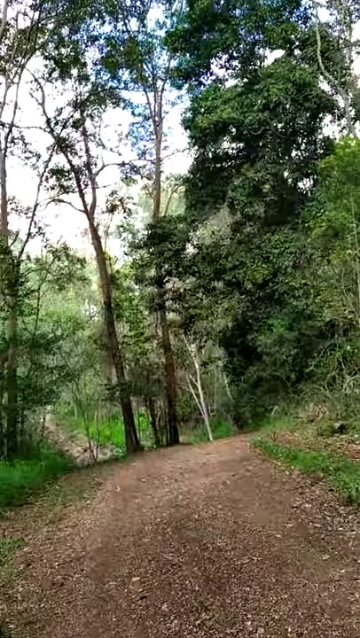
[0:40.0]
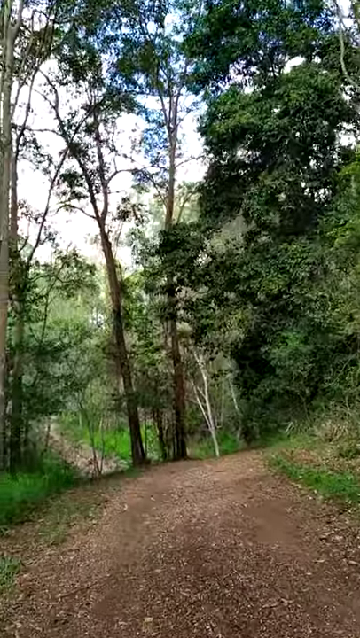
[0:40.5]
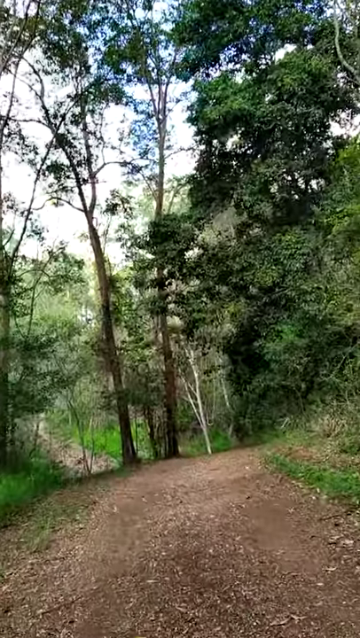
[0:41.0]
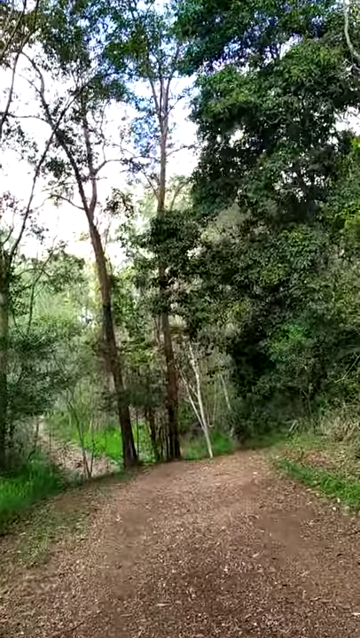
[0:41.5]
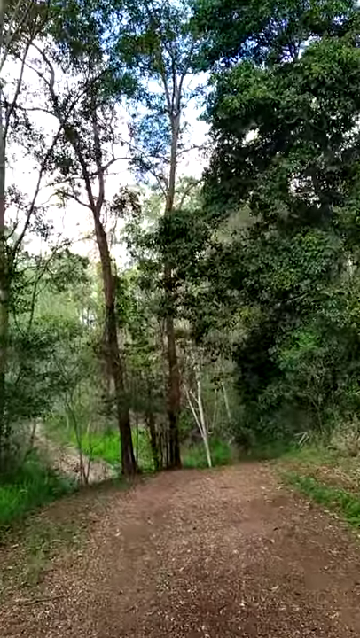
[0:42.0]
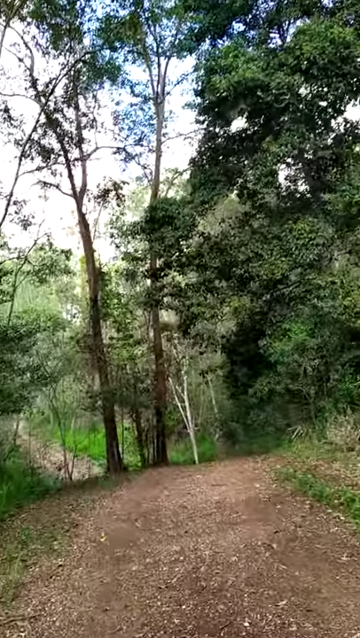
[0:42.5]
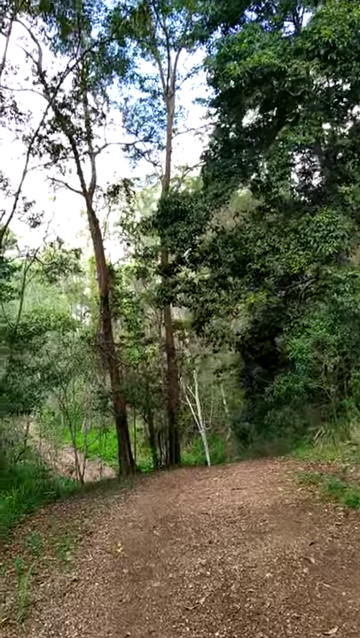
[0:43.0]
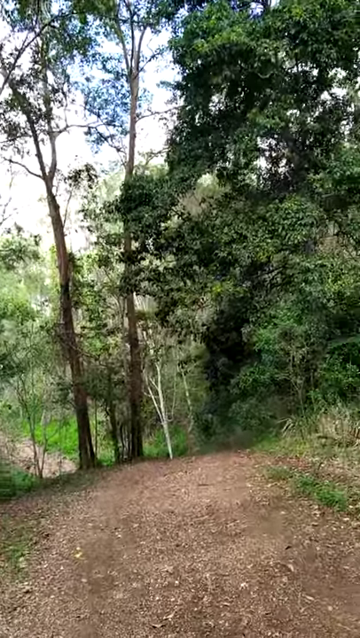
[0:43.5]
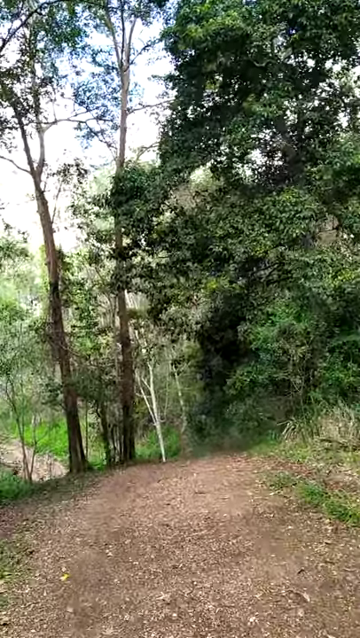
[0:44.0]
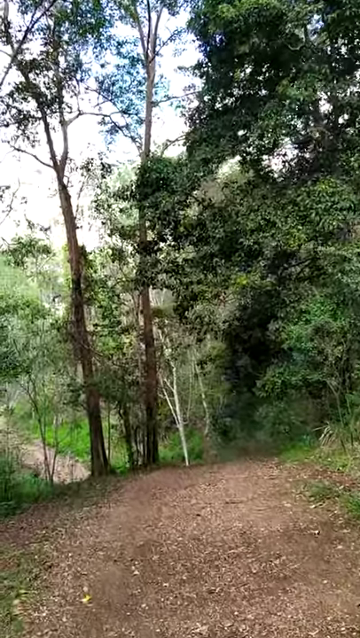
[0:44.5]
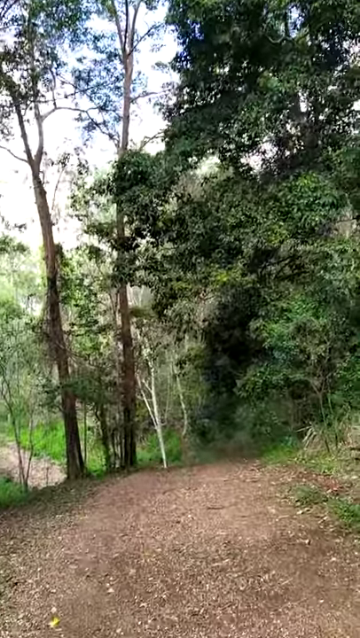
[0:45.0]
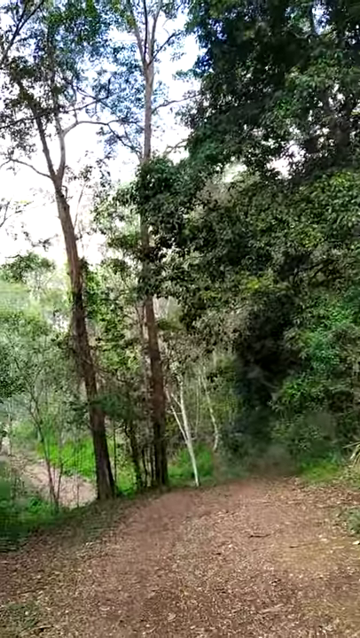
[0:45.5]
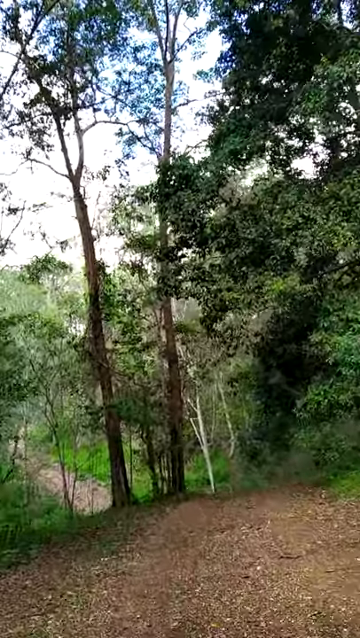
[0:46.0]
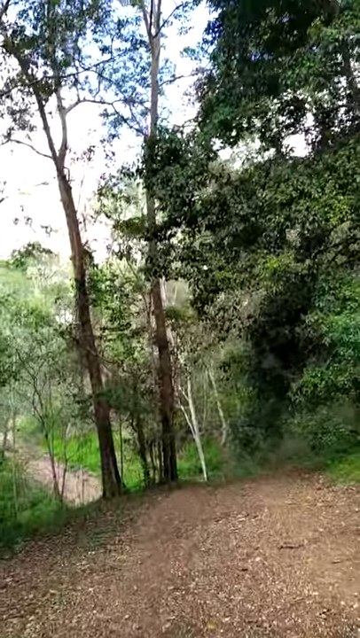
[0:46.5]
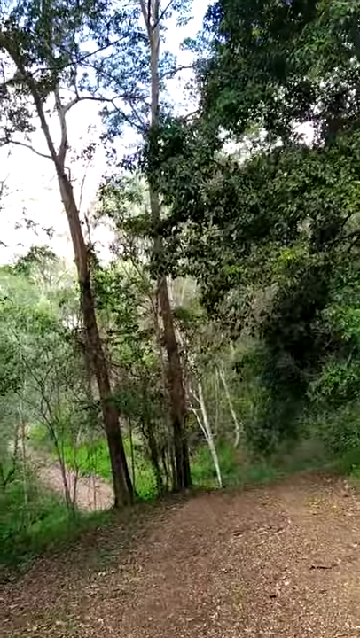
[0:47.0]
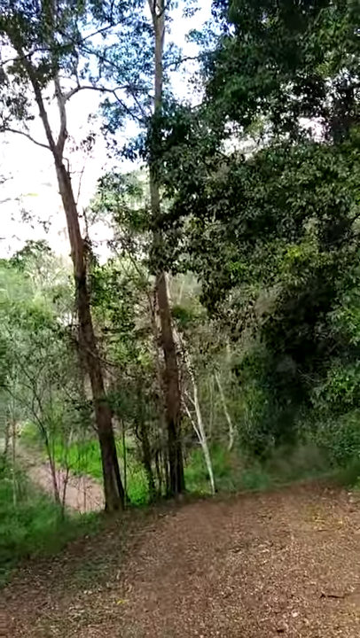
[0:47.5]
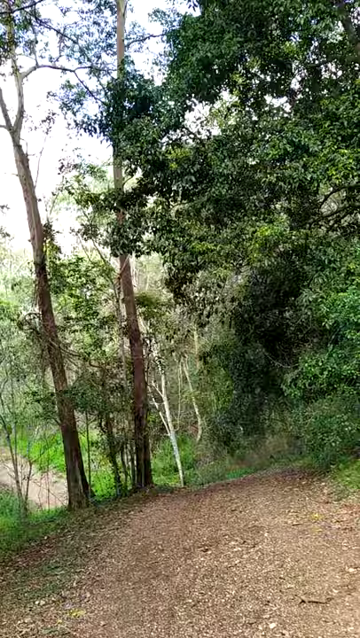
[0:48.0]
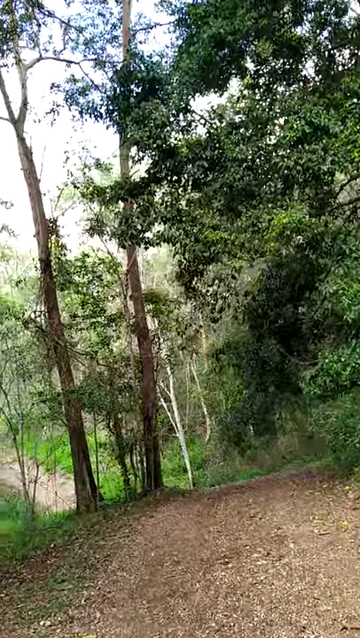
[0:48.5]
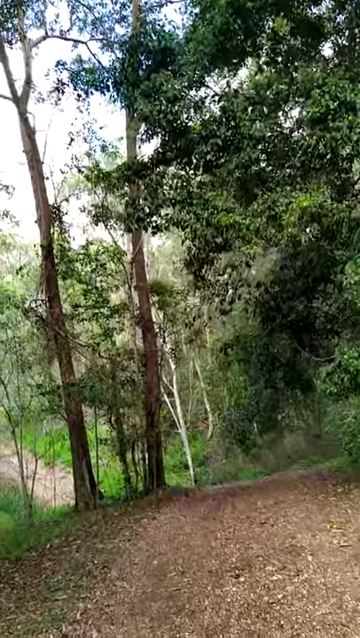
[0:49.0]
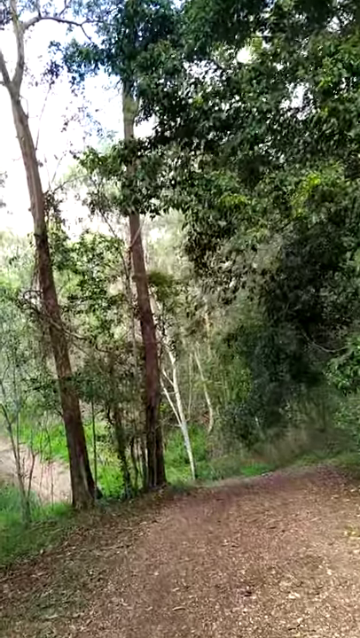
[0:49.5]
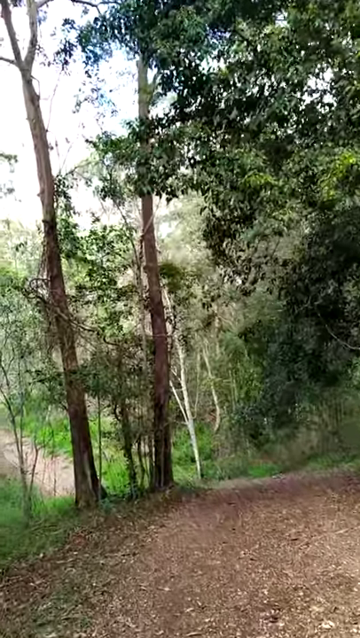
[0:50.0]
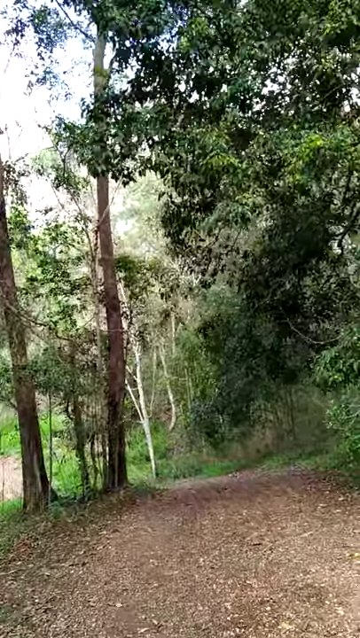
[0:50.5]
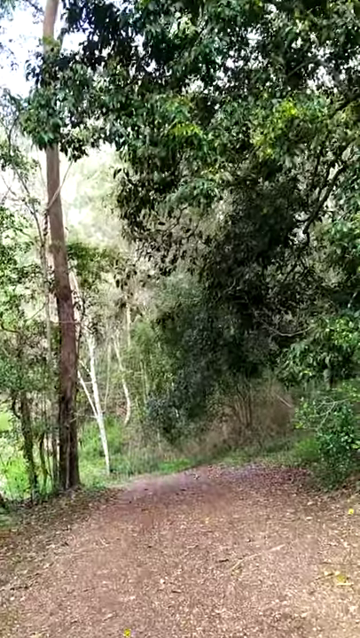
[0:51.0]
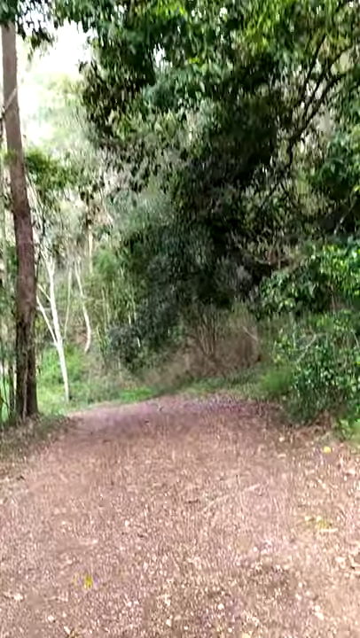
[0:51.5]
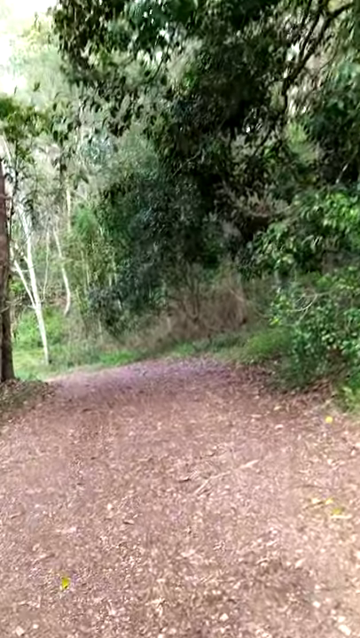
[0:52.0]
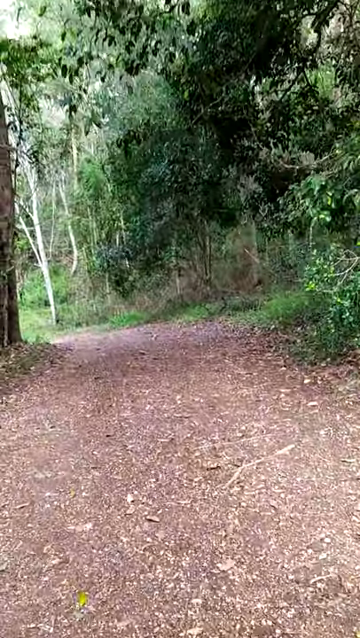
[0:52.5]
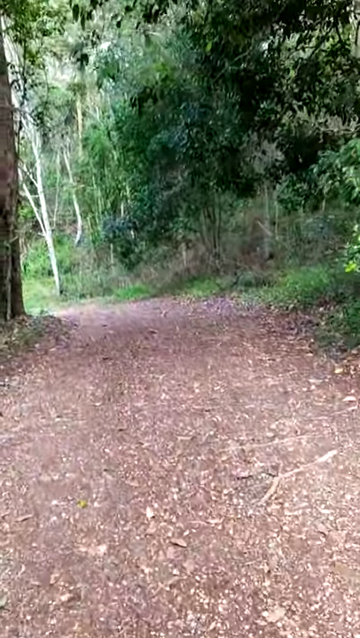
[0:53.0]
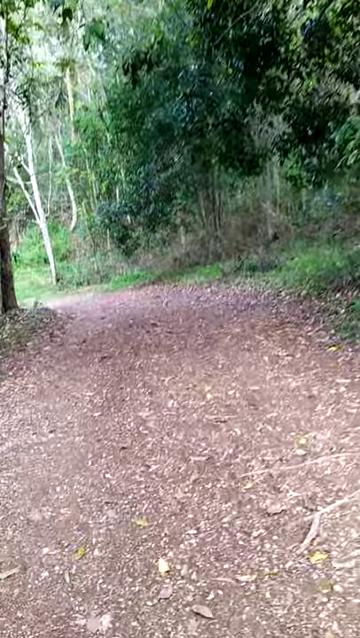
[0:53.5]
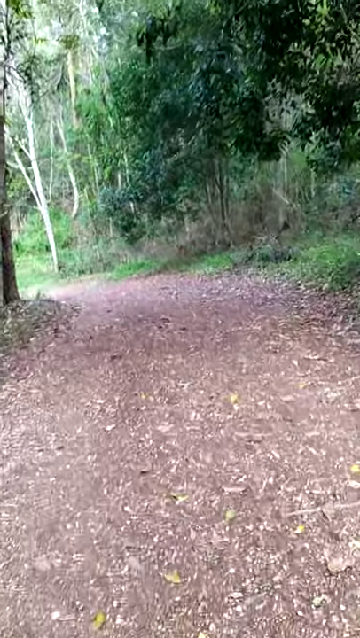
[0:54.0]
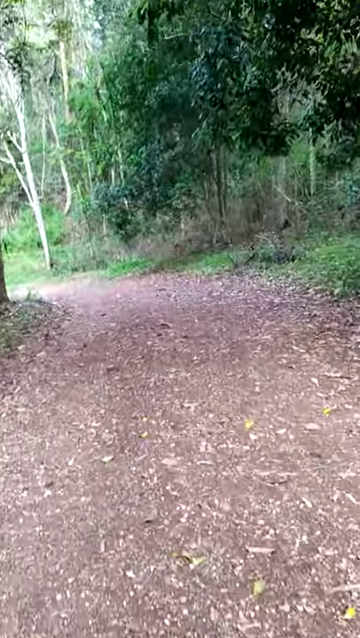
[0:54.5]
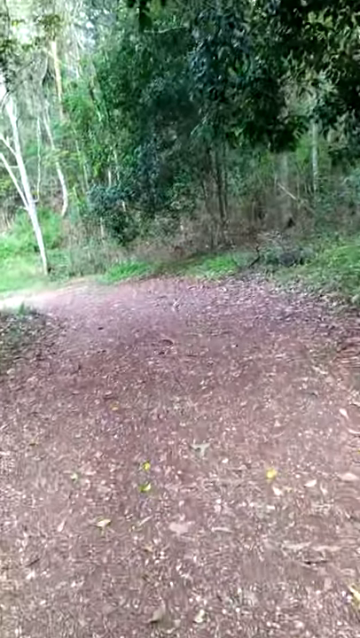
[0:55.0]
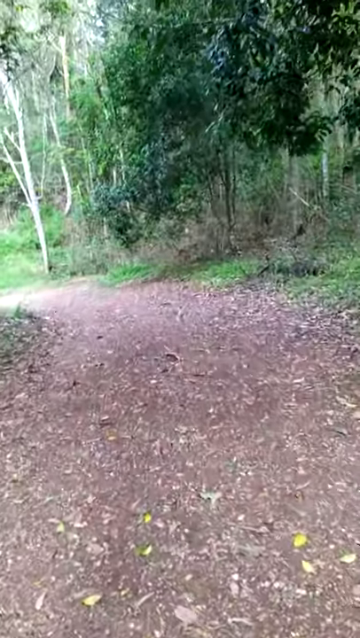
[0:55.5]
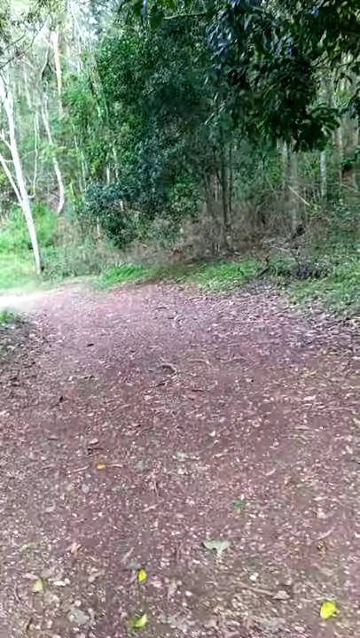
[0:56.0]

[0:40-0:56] From a first-person perspective, someone walks through a forested area on a narrow, light brown dirt path that is pretty much flat but may contain little rocks and pebbles. There are lots of trees and plants on the left and right sides of the path, with mostly green leaves and bushes everywhere. Along the way the person comes across two distinct trees that are very tall, with thin brown trunks and not many leaves on top. The person continues down the path, which seems to have a slight downward slope. It seems to be a bright, sunny day; looking up at the canopy of branches and leaves, a bright white sky peeks through.